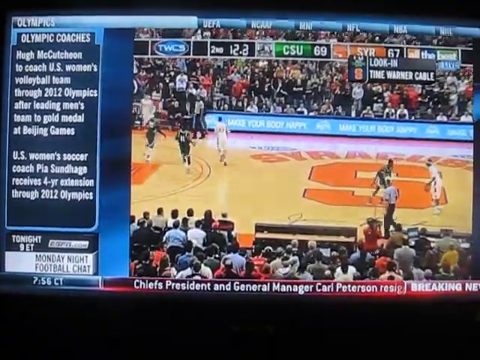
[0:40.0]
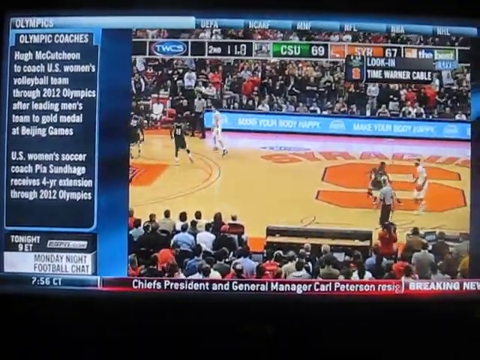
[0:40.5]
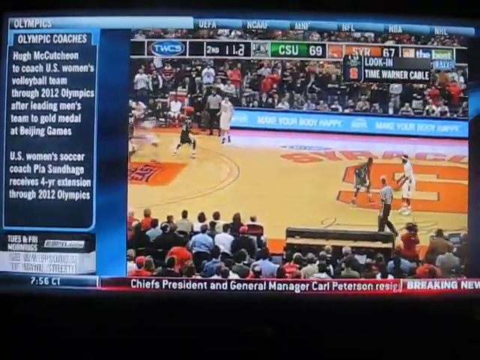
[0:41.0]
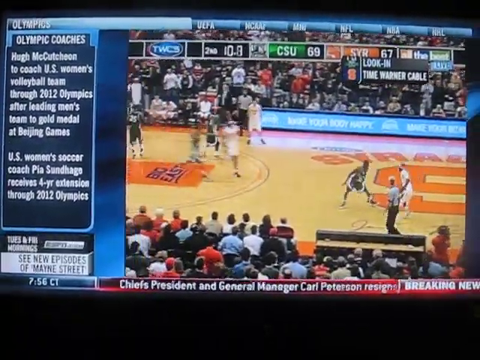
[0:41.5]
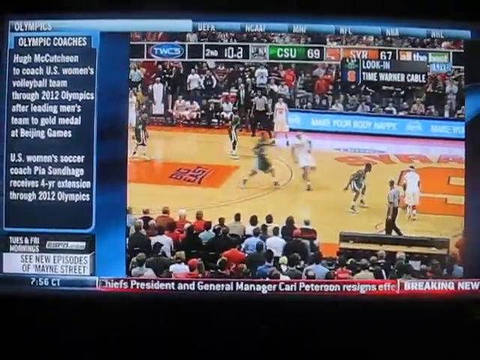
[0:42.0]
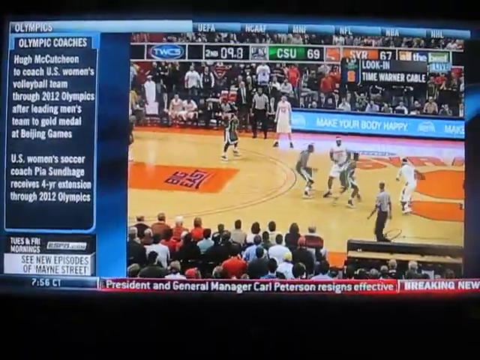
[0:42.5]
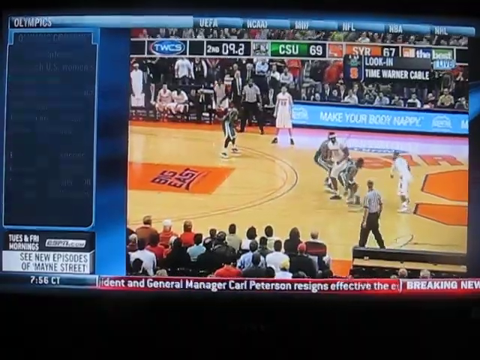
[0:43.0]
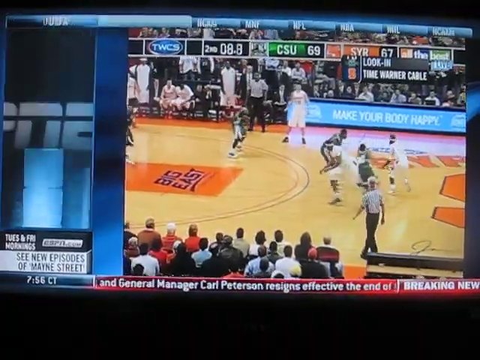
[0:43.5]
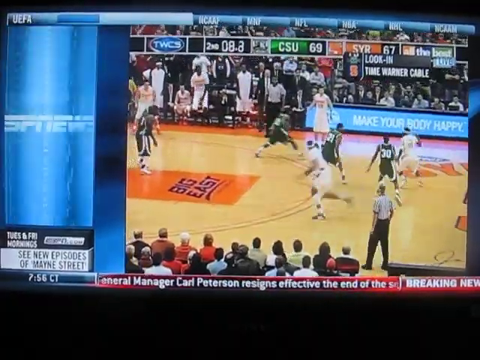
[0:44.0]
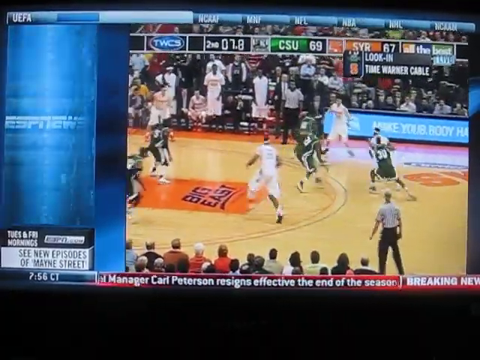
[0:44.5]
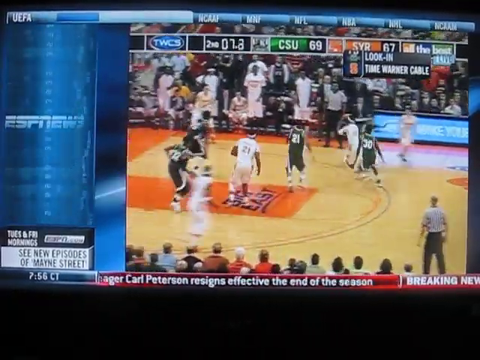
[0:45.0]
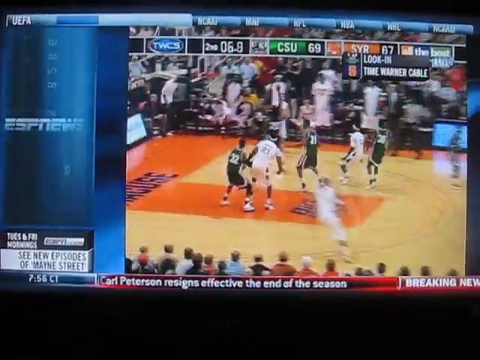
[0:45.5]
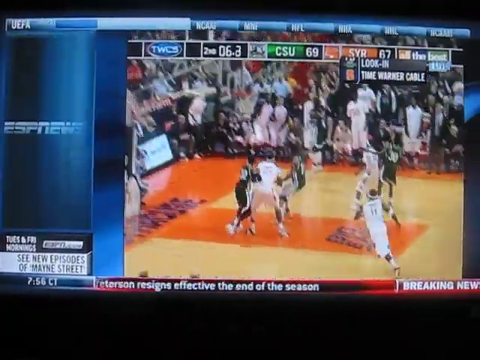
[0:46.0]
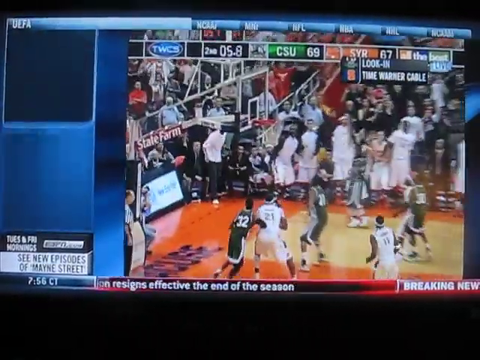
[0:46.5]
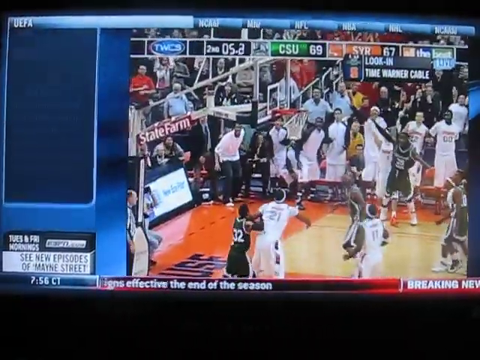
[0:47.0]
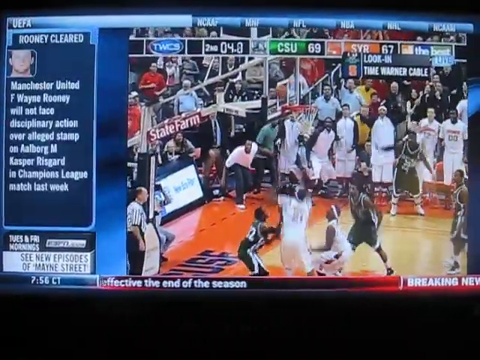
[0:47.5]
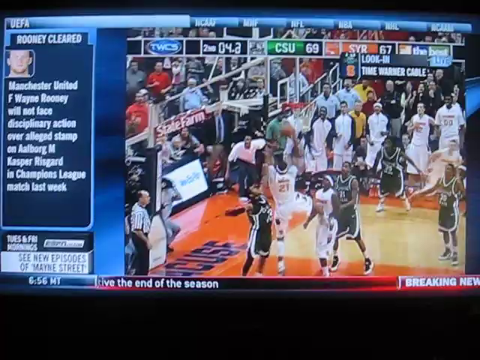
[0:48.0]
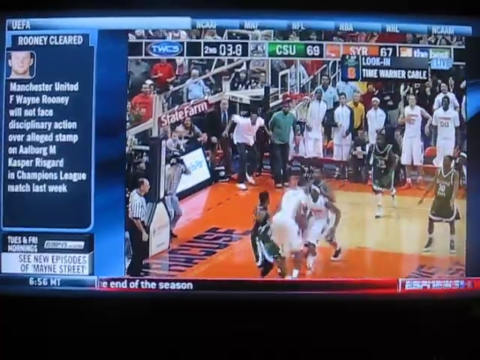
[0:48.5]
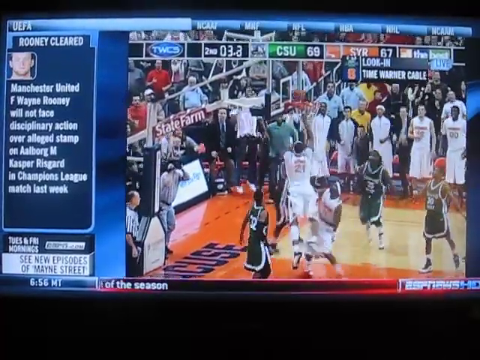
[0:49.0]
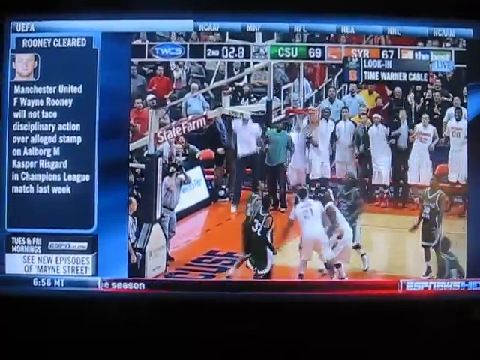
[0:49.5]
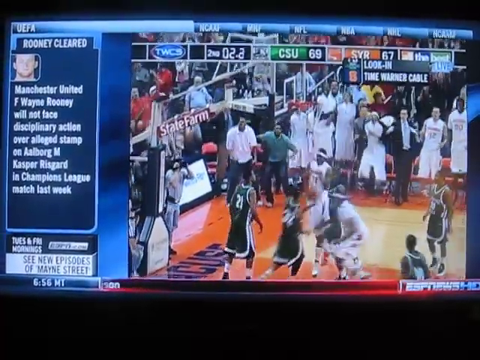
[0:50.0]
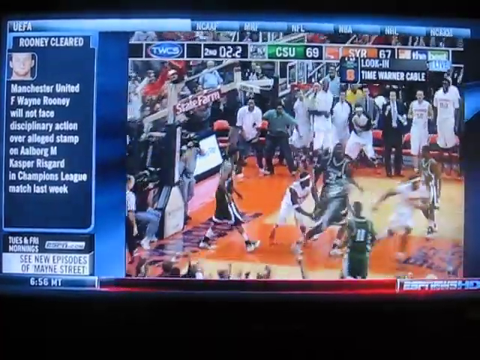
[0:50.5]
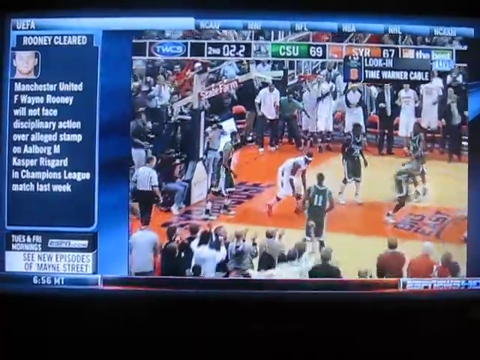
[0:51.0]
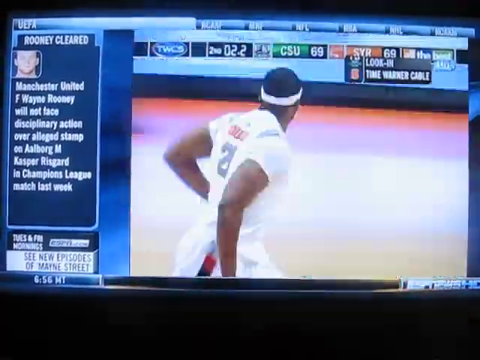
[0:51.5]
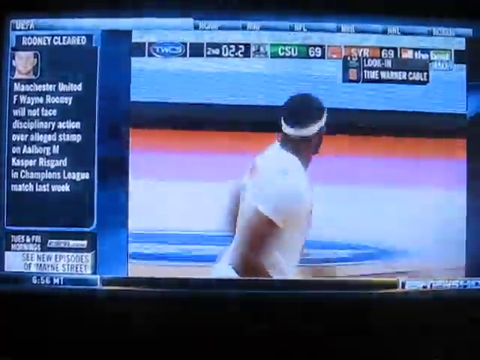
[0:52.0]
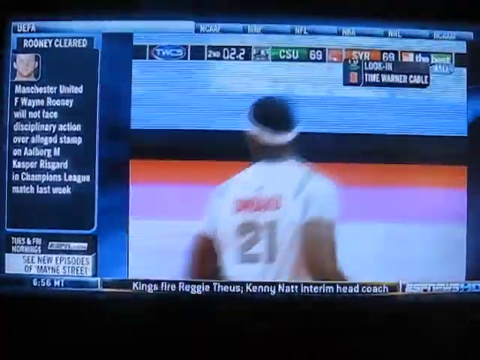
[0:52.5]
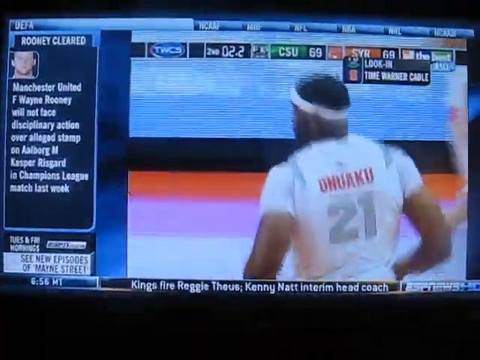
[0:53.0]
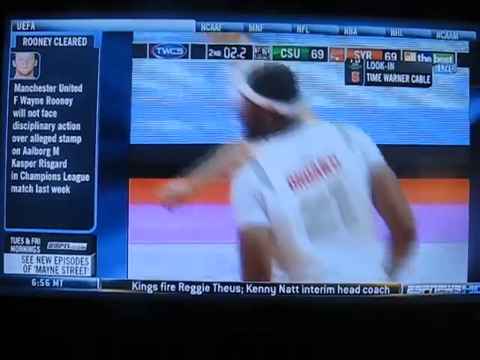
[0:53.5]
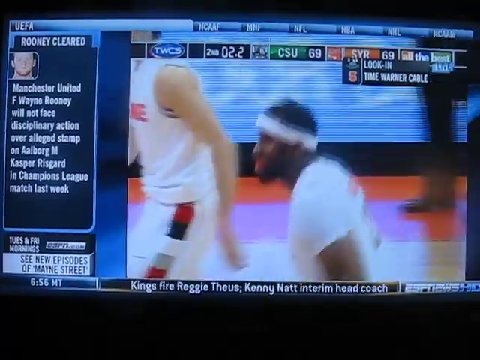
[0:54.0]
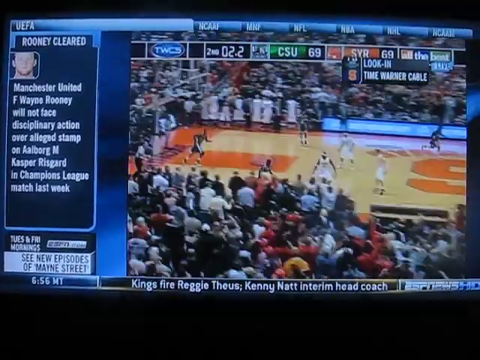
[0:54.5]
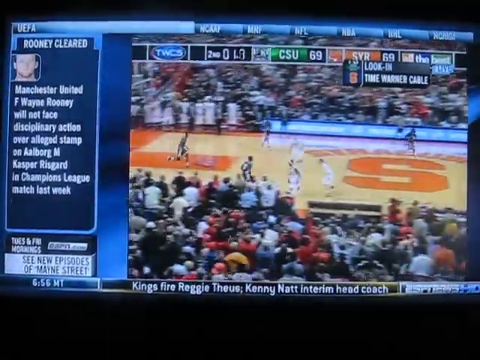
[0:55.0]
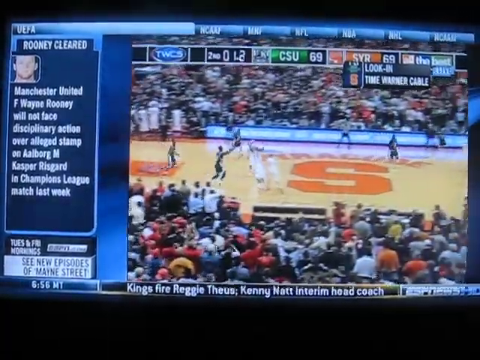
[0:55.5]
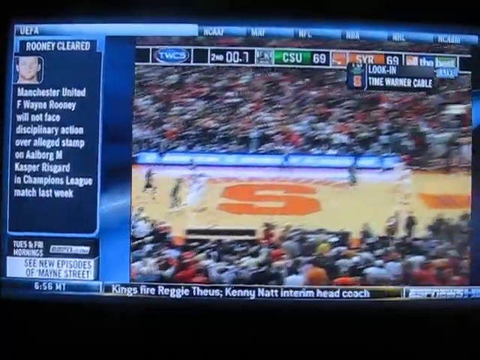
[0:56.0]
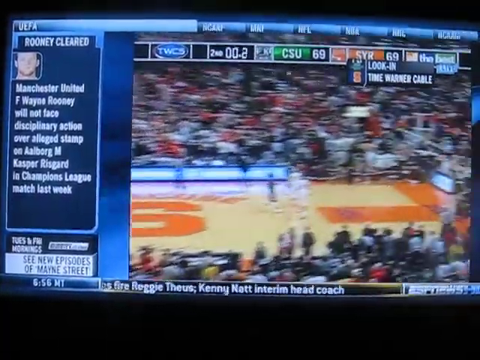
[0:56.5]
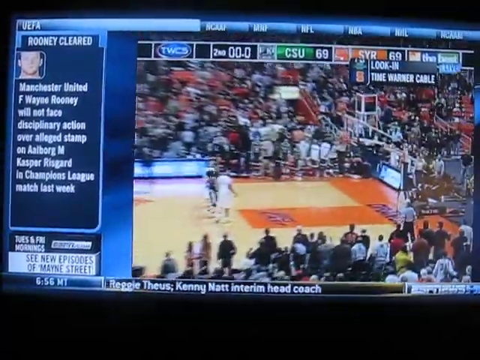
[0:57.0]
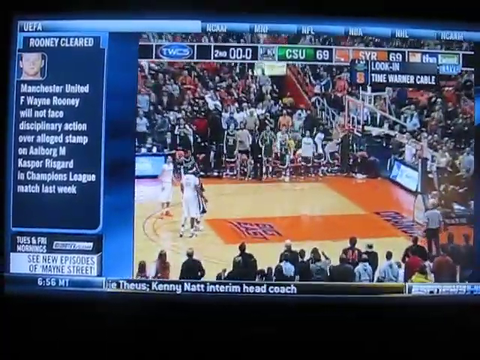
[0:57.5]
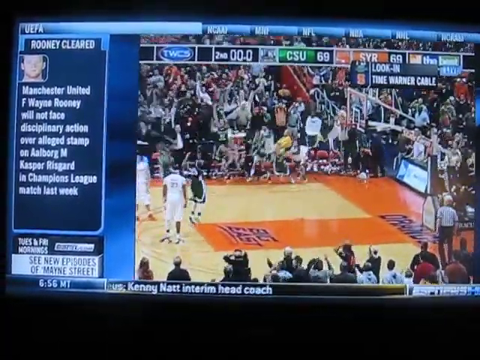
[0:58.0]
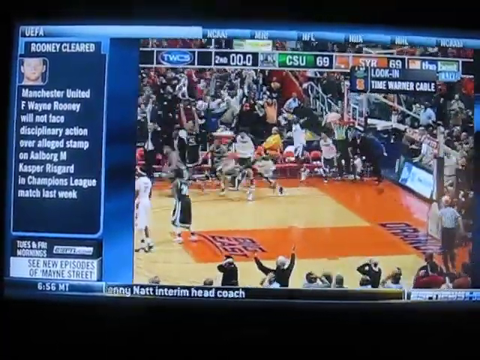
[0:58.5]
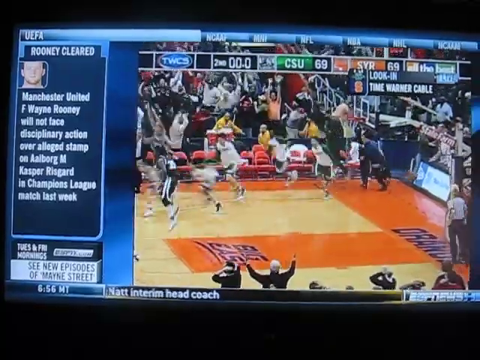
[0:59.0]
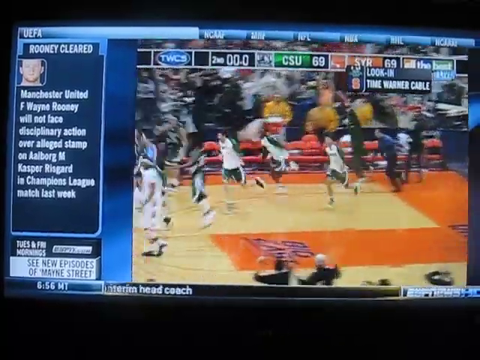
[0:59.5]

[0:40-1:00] The score shows the second quarter with CSU at 69 points and Syracuse at 67. The crawler at the bottom carries the breaking news that Chiefs President and General Manager Carl Peterson resigned, and the time reads 7 56 Central Time. The news on the left of the screen is about the Olympics and Olympic coaches. In the game, a player in a white jersey dribbles from the center of the court while three players in green jerseys and two players in white jerseys try to get the ball, and the referee walks and watches. The player in the white jersey with the white headband passes the ball, and another player in a white jersey with a white headband throws the ball into the basket. The players then race down to the other side of the court.